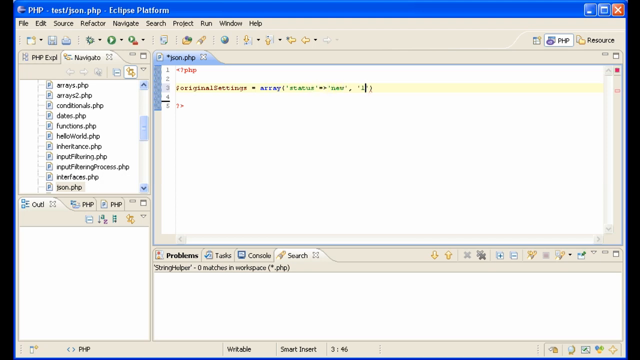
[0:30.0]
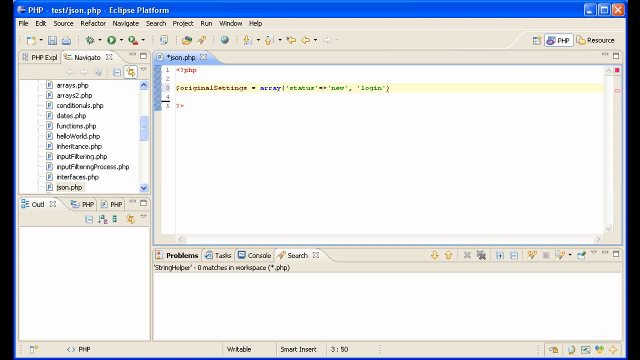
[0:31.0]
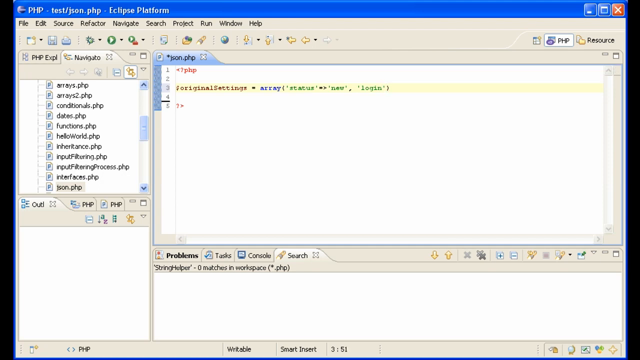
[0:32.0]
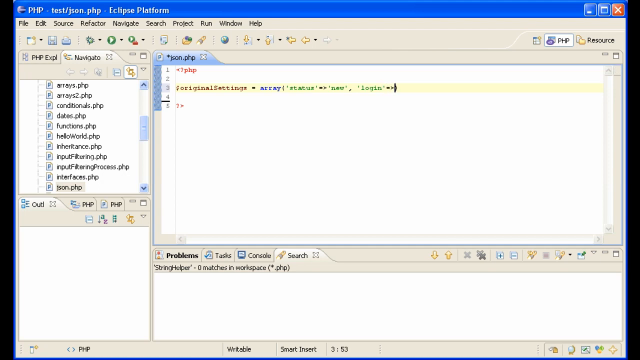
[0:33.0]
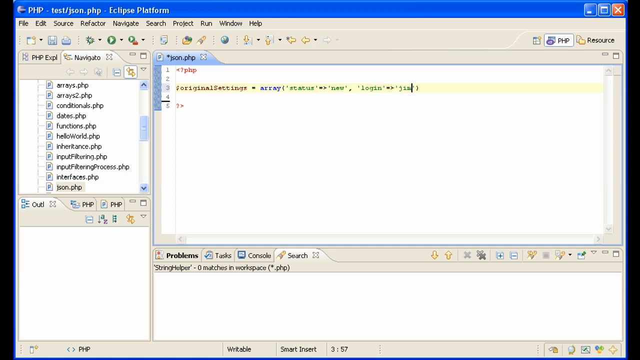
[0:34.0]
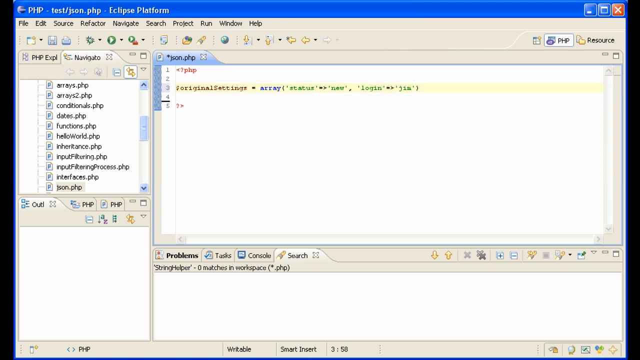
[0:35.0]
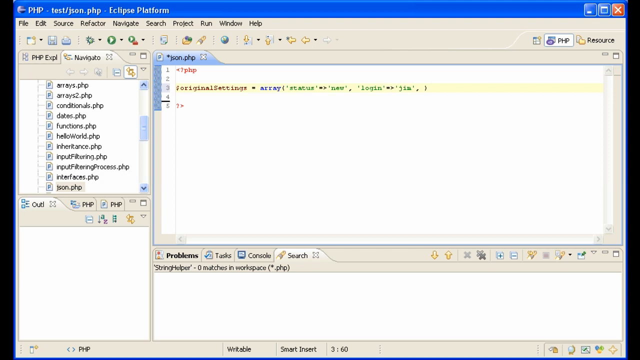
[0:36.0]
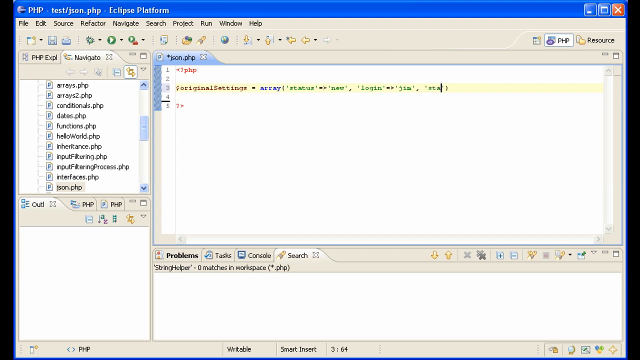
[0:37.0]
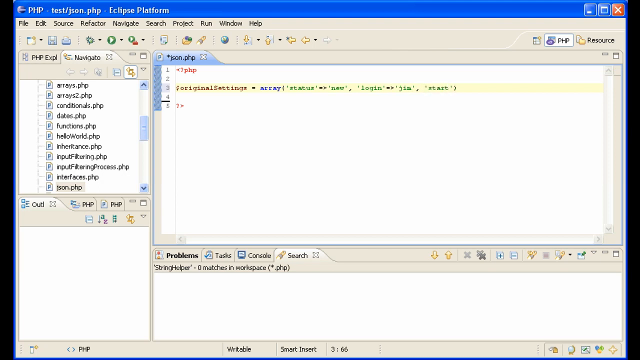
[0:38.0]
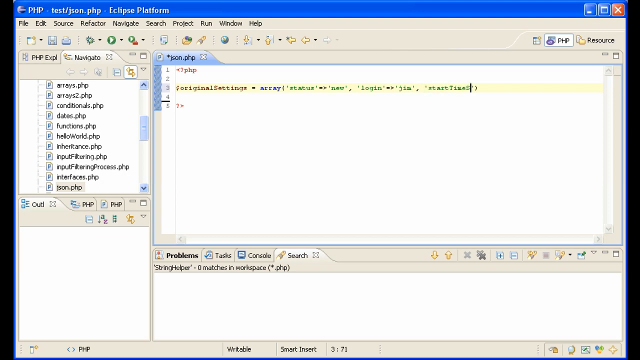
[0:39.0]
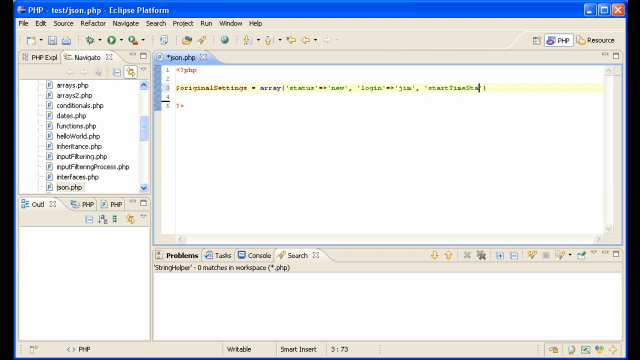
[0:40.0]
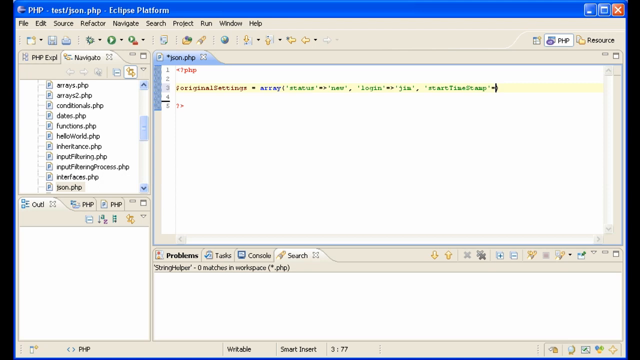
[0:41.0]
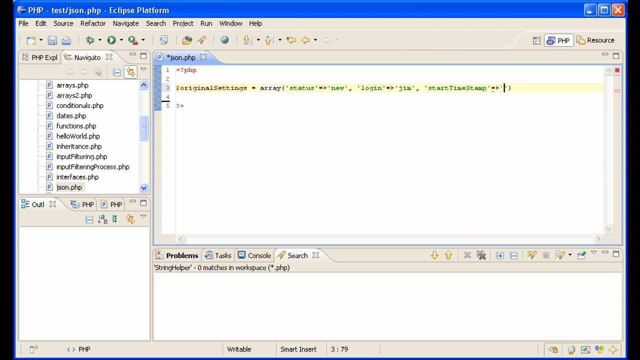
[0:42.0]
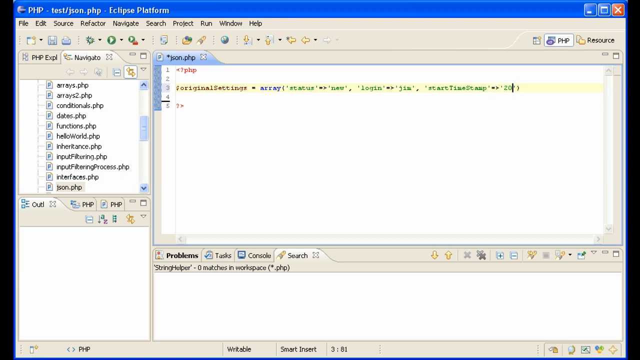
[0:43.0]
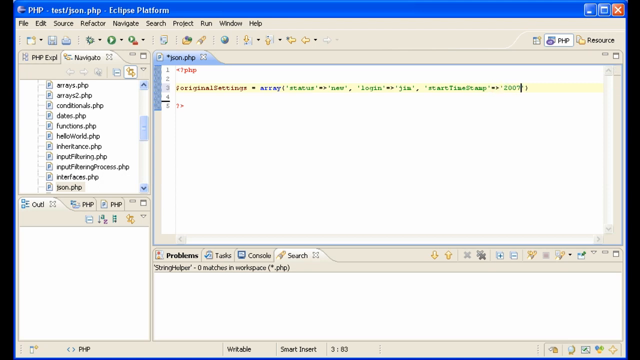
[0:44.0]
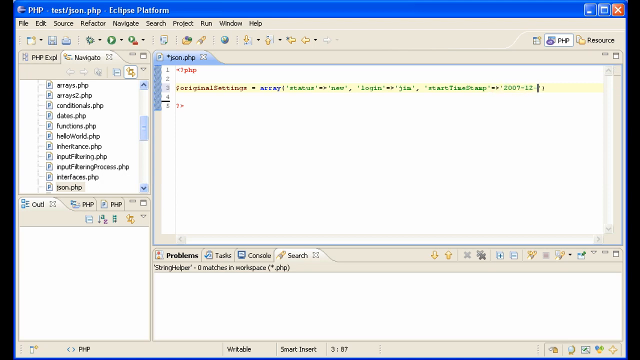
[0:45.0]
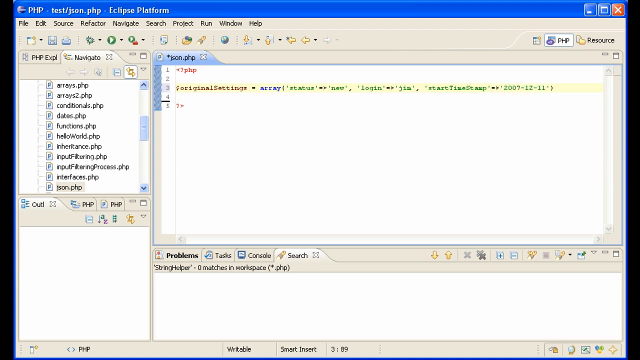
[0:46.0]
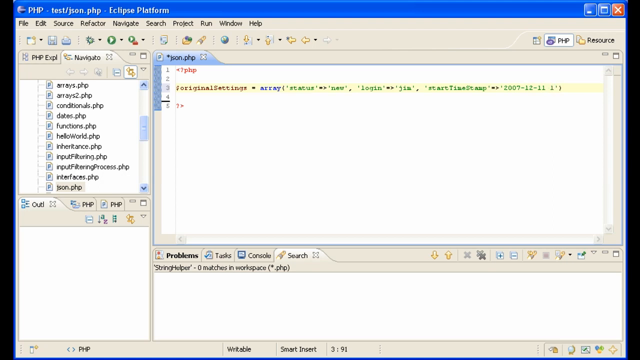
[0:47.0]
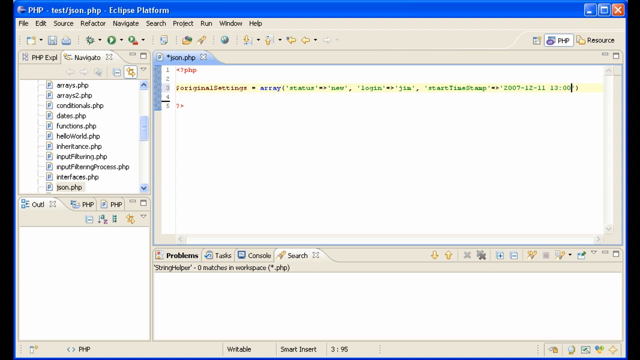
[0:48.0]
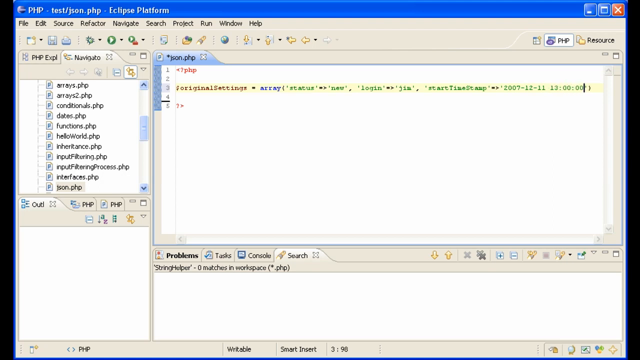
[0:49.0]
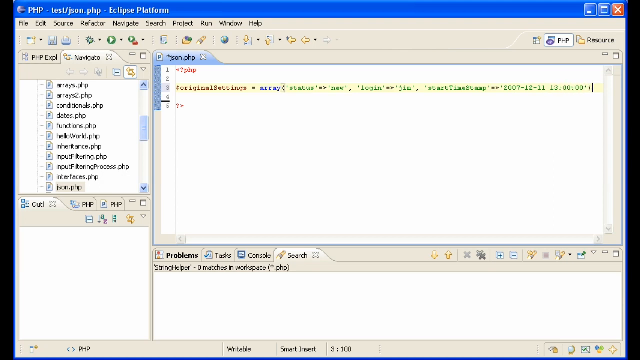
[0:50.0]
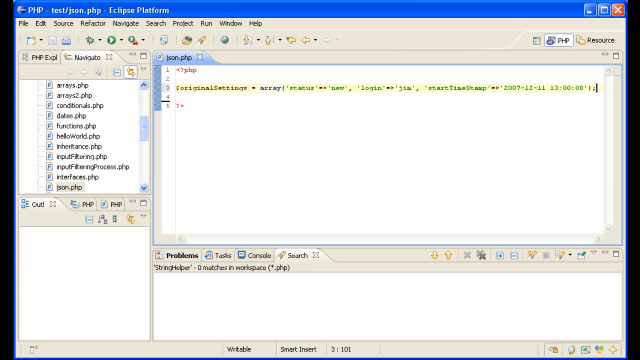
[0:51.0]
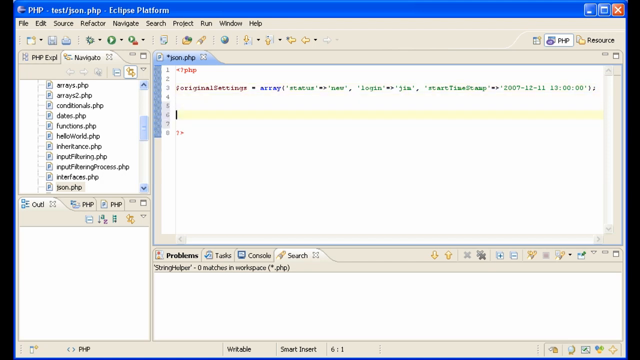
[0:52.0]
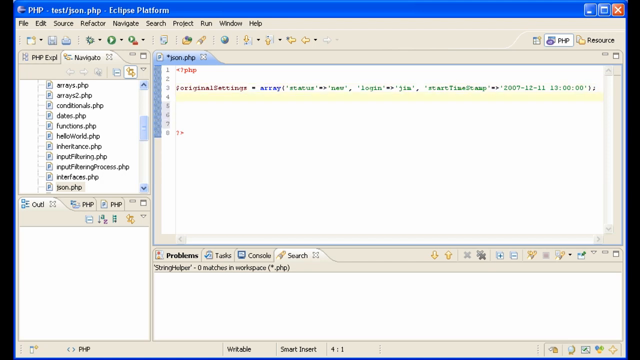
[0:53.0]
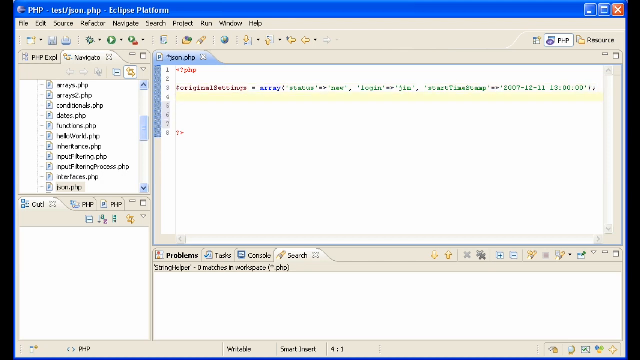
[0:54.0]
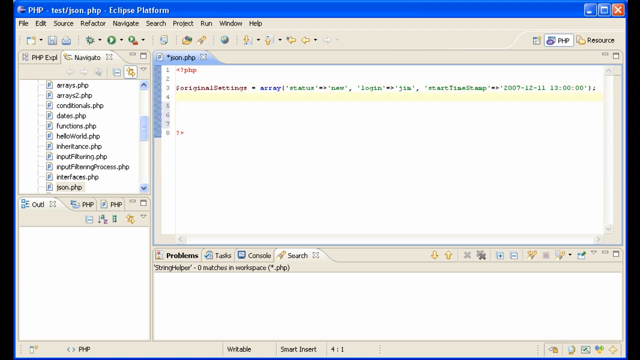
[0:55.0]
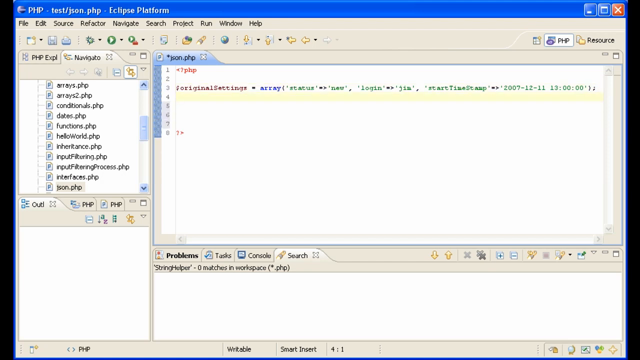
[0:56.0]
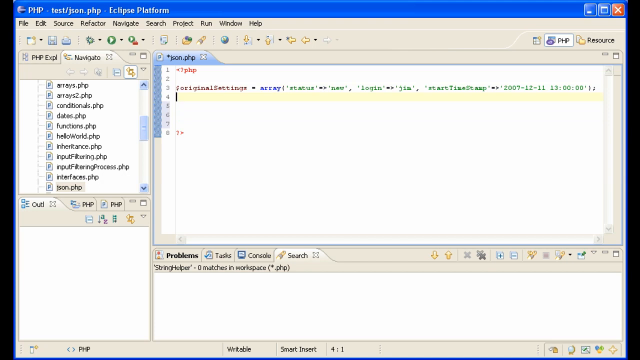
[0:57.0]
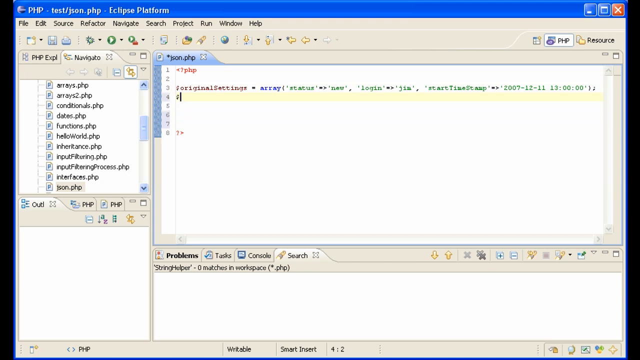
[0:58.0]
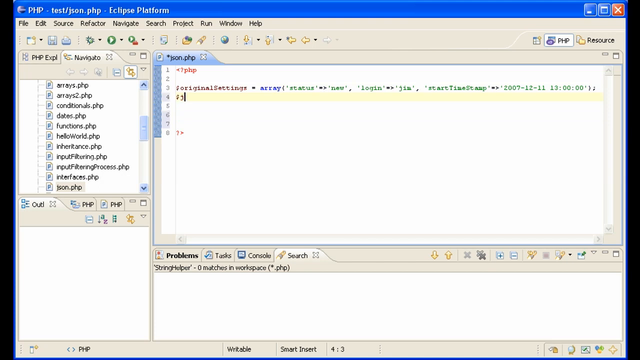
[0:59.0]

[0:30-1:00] More text is typed onto the third line. The word login is typed, followed by a couple of symbols that look like a right-pointing arrow, and then the name jim. A comma is placed, then the word start is written and extended to startTimeStamp. Another symbol that looks like a right arrow is typed, followed by the date 2007-12-11 and then the time 13:00:00, with a semicolon after it. A couple of lines of space are made, and the cursor moves to the fifth line, which becomes highlighted in yellow. The cursor then moves up to the fourth line, which is now highlighted, and blinks there for a few moments before a symbol and a few letters are typed.